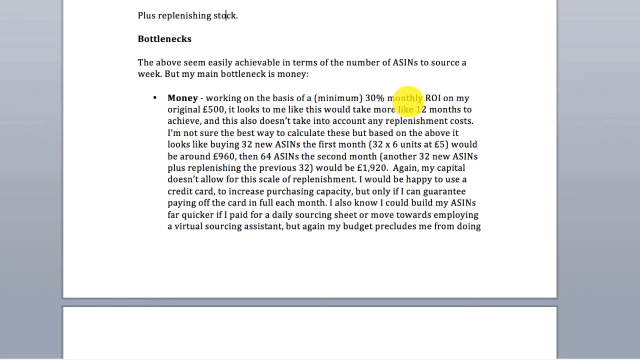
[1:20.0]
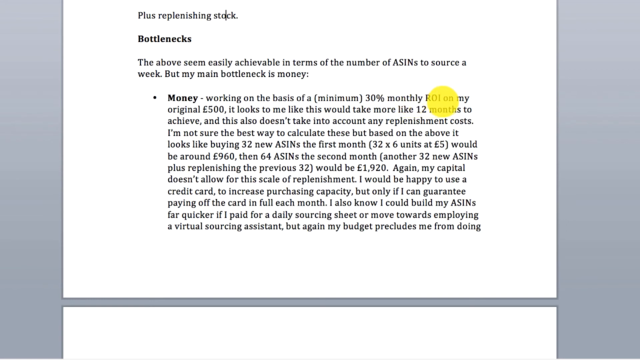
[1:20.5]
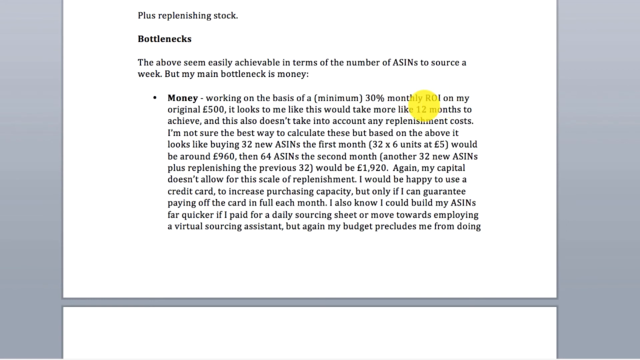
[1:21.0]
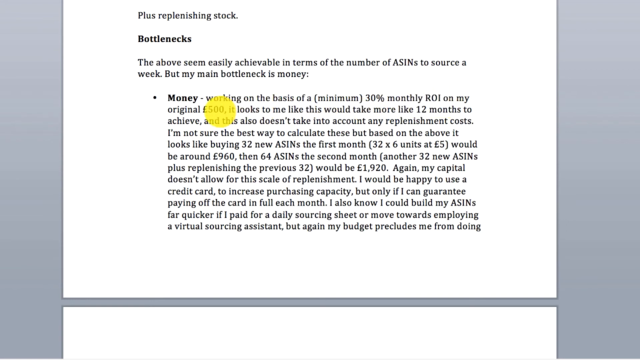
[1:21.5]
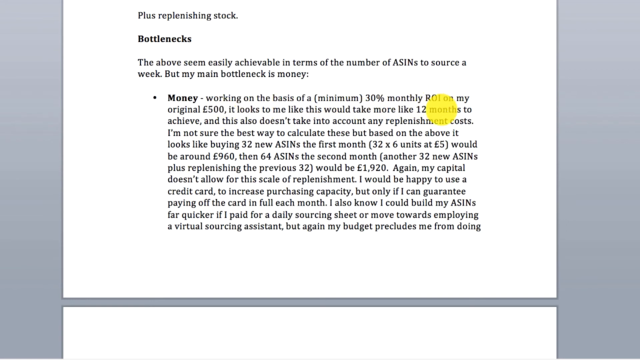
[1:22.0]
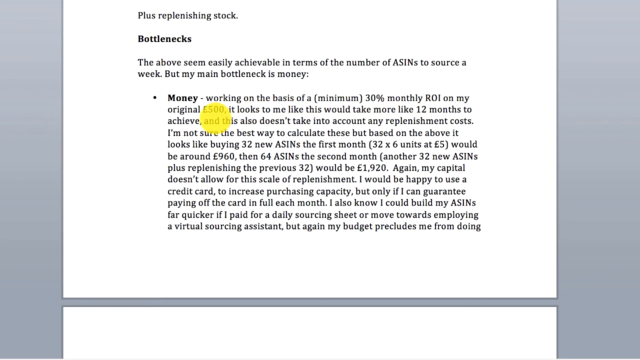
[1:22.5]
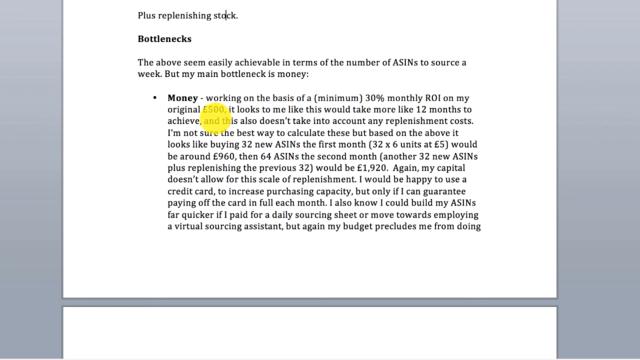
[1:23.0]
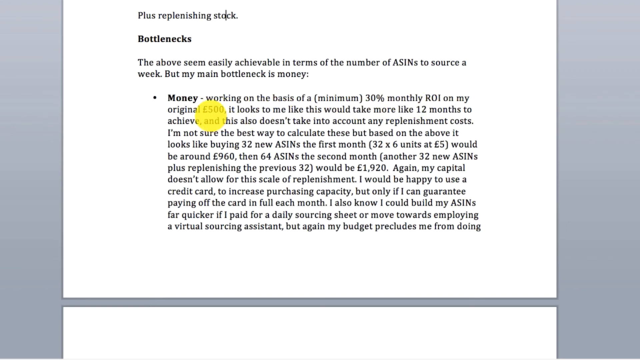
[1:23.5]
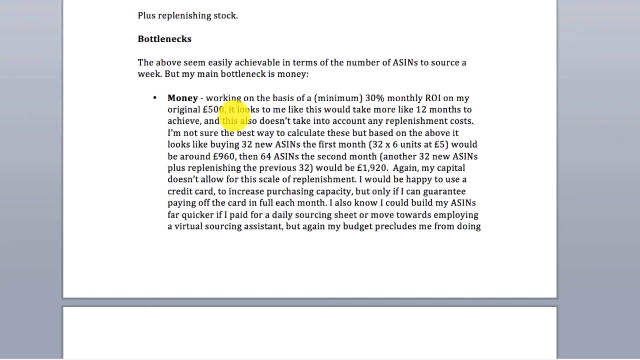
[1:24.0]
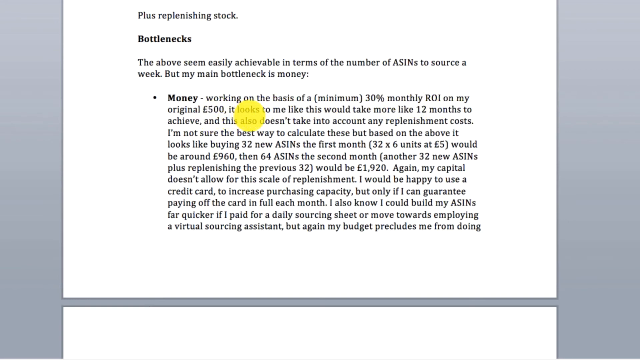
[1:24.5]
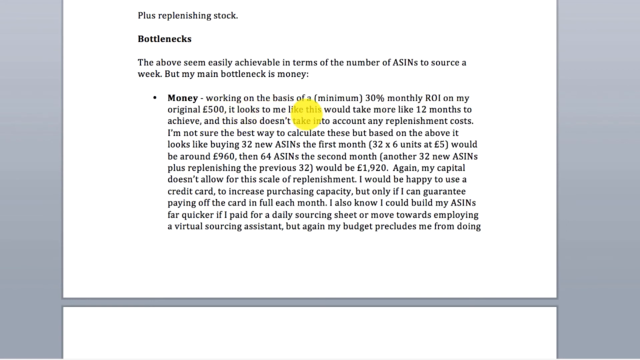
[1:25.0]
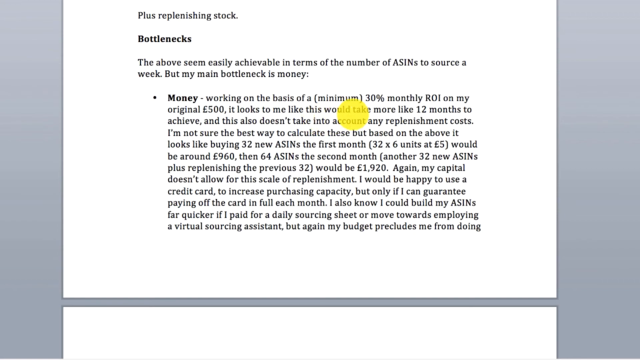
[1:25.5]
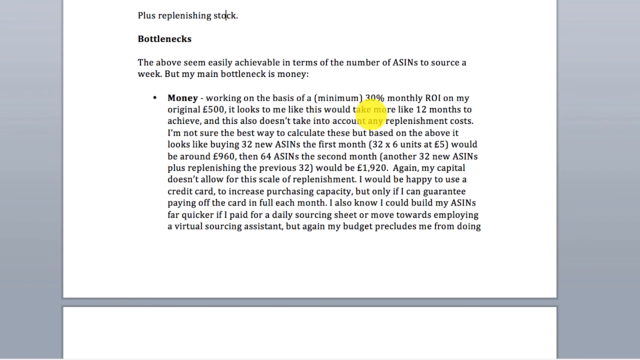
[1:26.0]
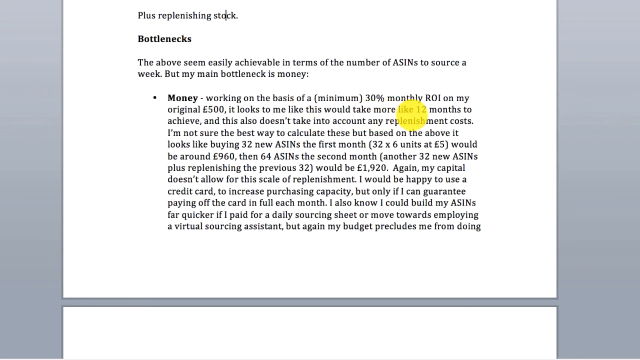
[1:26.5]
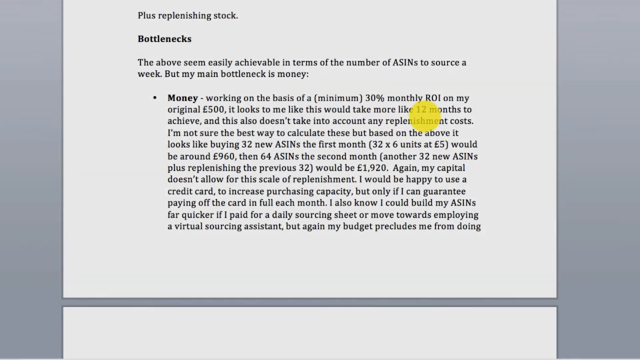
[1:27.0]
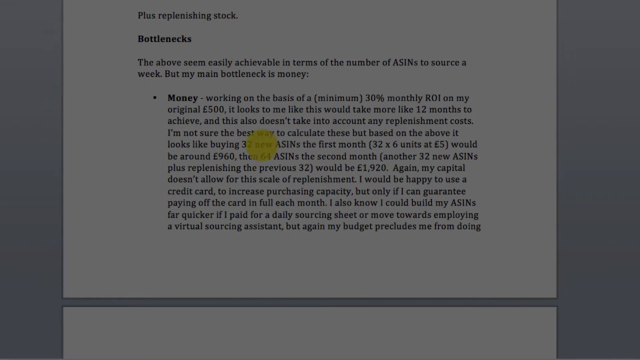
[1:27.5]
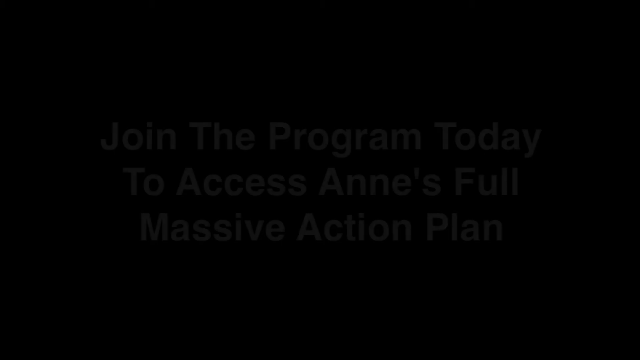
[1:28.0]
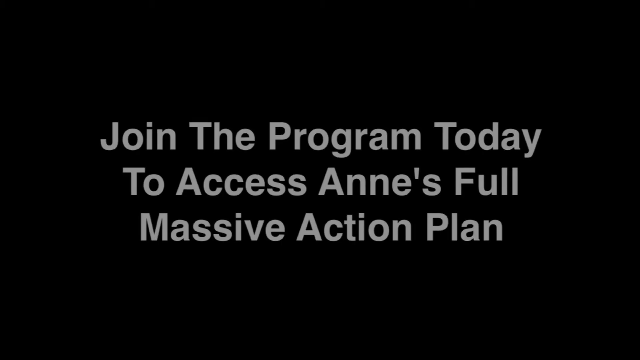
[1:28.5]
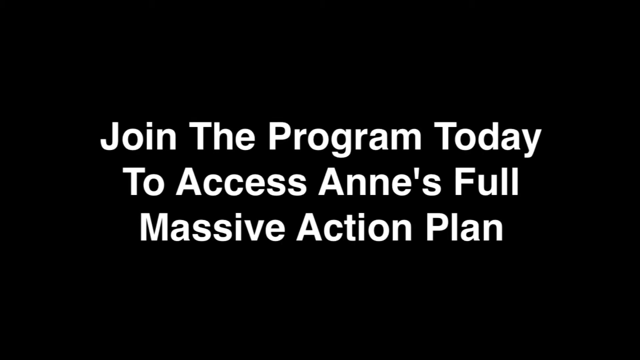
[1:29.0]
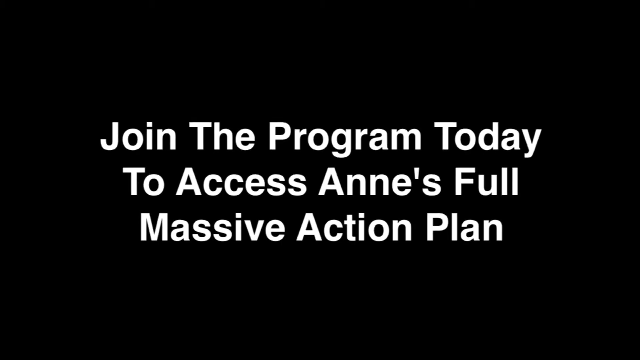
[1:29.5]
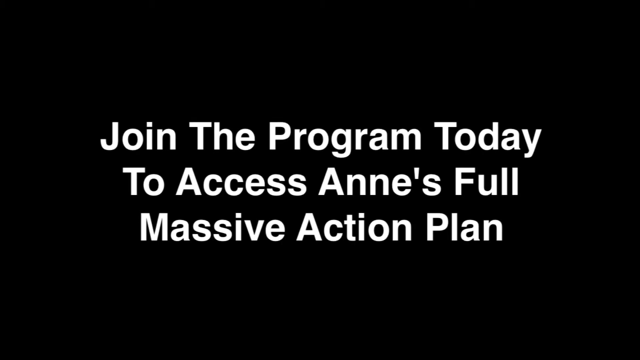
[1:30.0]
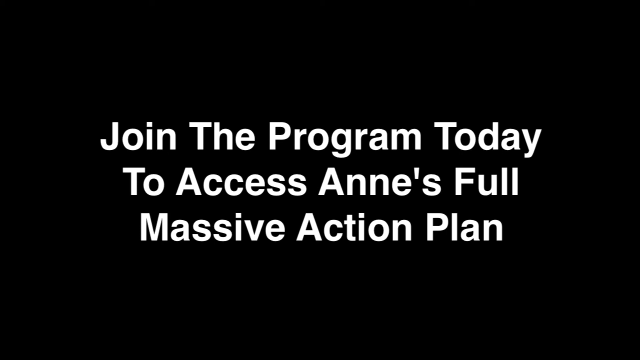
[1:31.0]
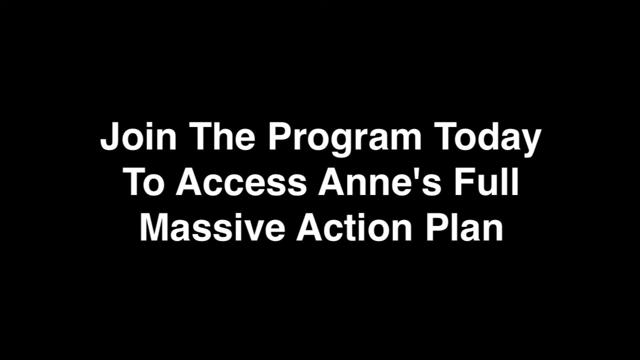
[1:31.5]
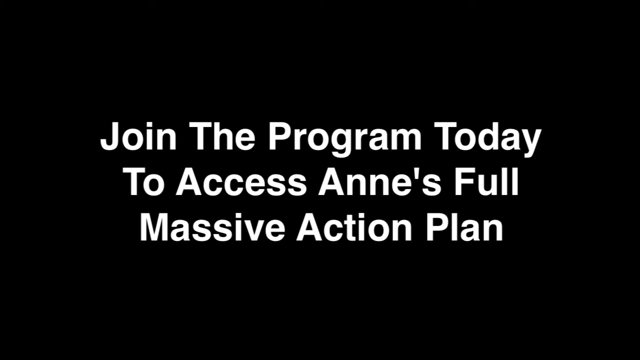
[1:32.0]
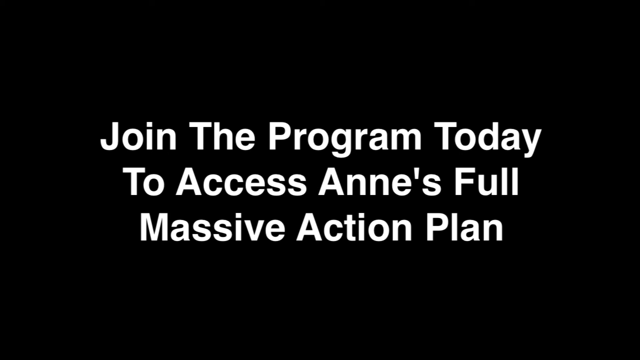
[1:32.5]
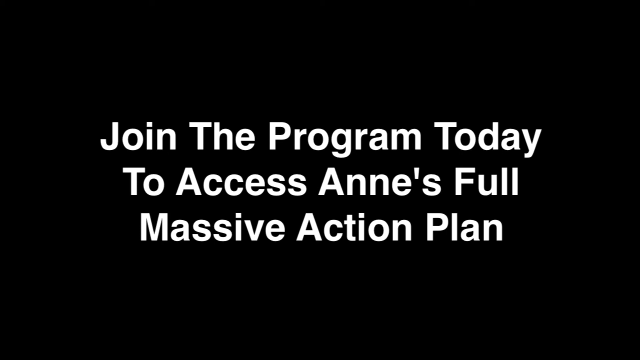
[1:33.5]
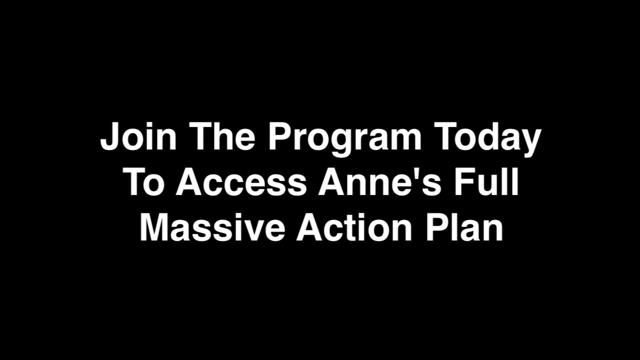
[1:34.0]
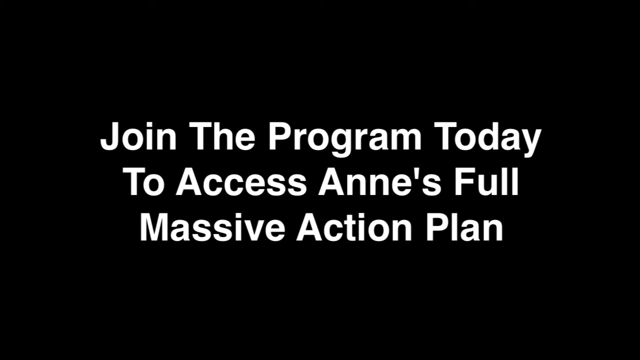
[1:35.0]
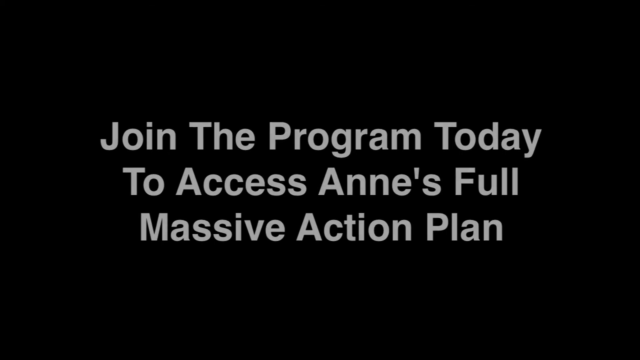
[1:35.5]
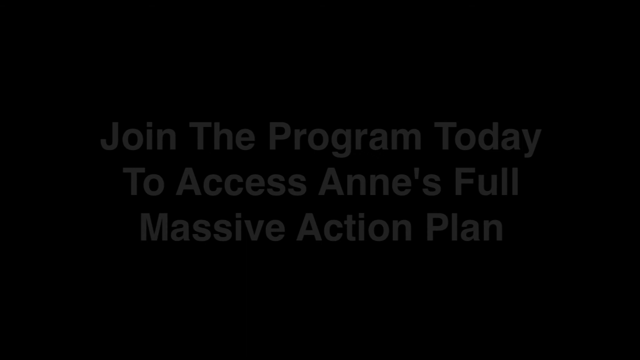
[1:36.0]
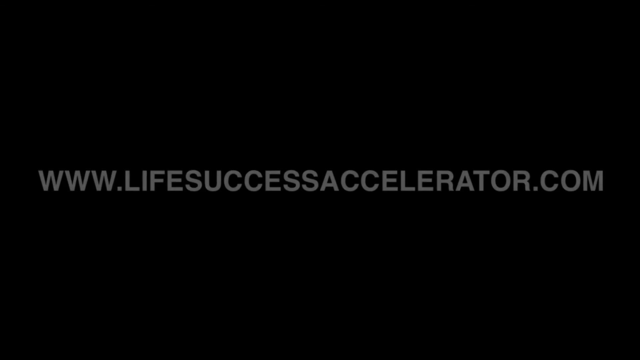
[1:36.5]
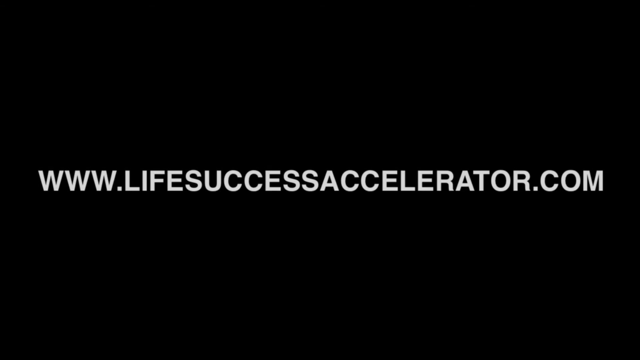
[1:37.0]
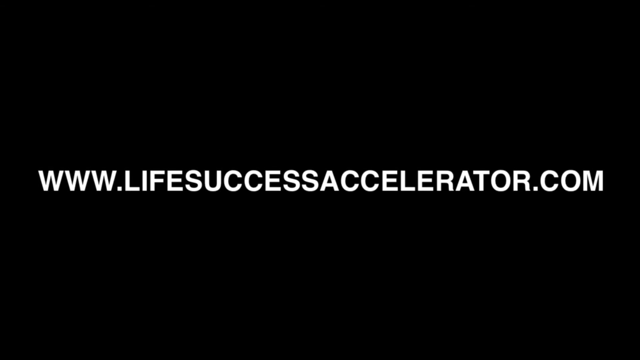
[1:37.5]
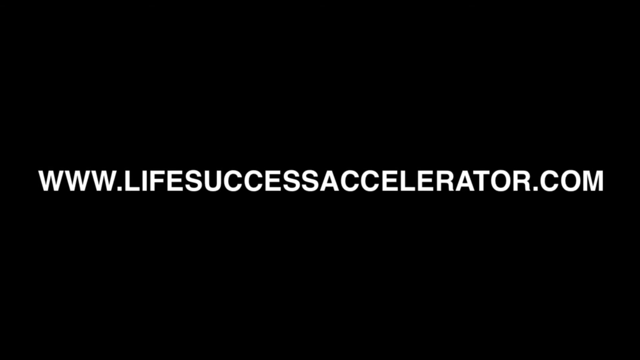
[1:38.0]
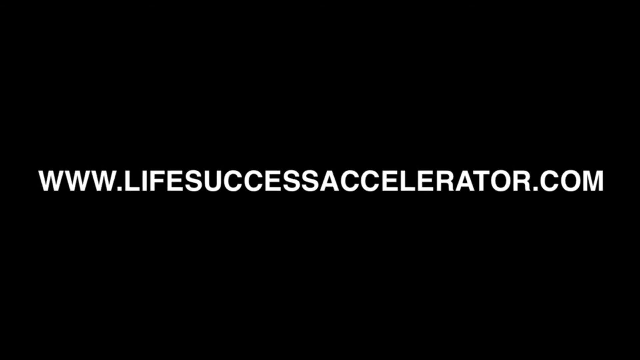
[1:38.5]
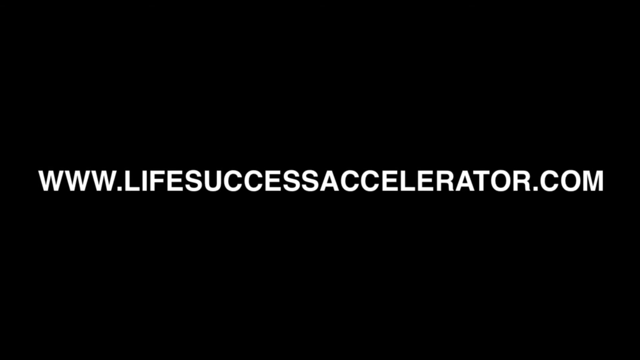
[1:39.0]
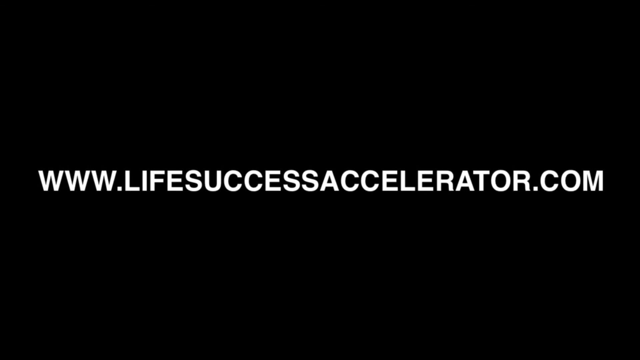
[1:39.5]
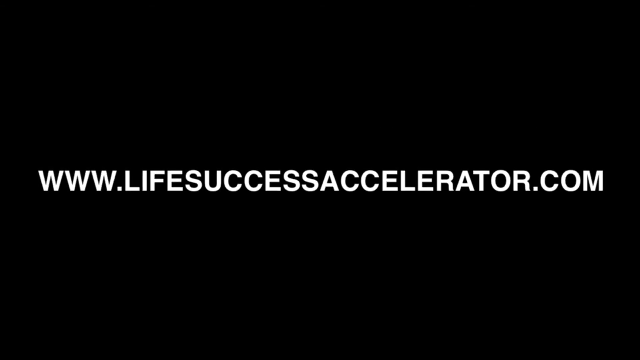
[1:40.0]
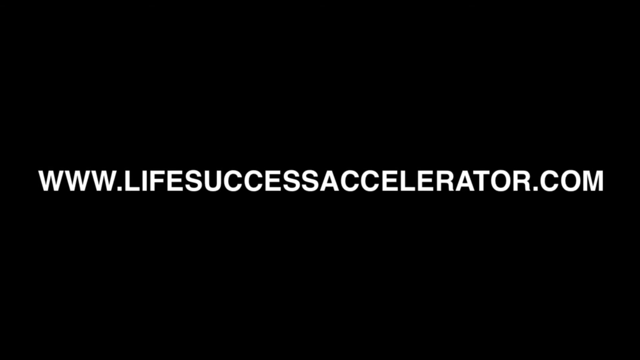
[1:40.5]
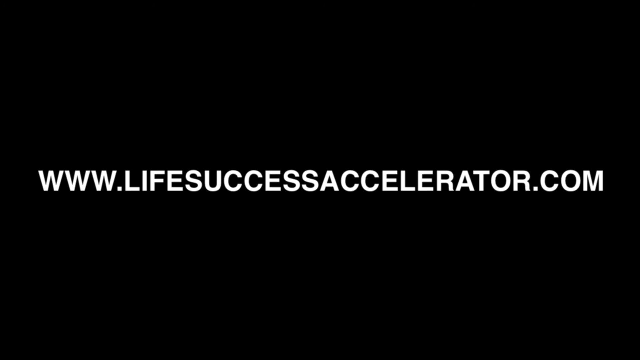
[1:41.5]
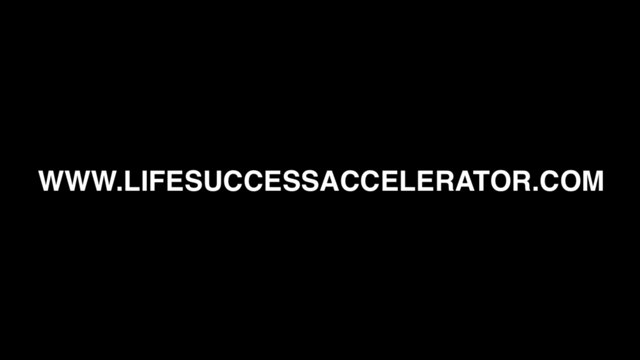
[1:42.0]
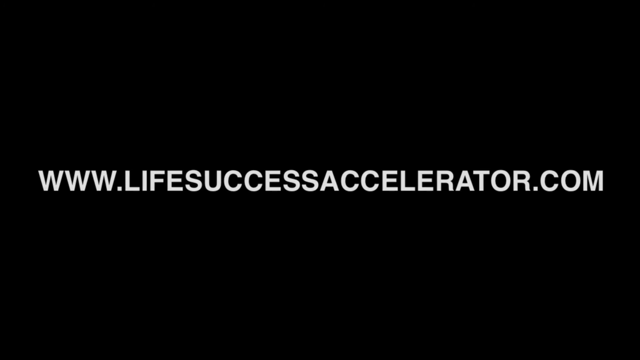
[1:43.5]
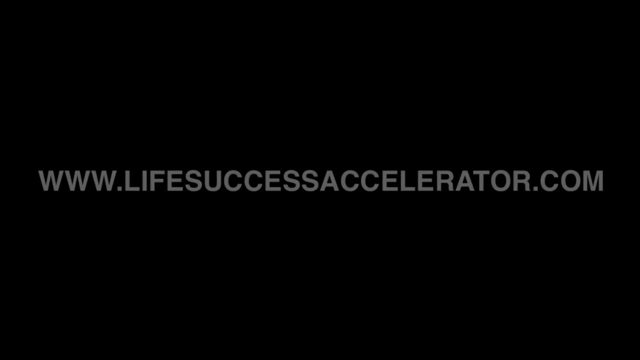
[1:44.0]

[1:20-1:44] A Word document appears, looking like notes regarding bottlenecks, with "bottlenecks" in bold at the top of the screen, which seems to be the bottom of a page. There is some text and a bullet point with a large paragraph describing money as a bottleneck, and a cursor appears to be reading it back and forth. The document dissolves out to a black screen with white text that says "join the program today to access Ann's full massive action plan." This dissolves into a website address on the same black background in white text: "www.lifesuccessaccelerator.com."